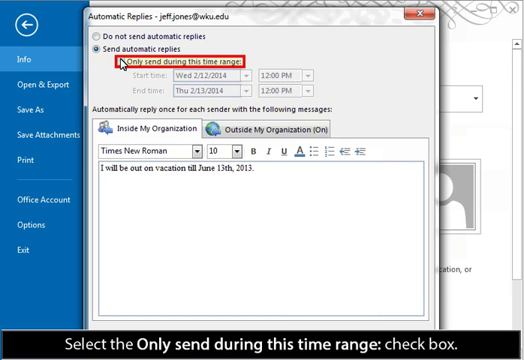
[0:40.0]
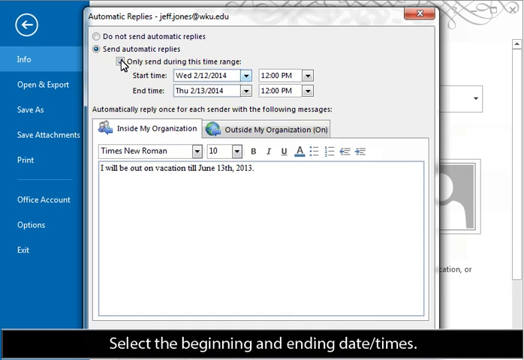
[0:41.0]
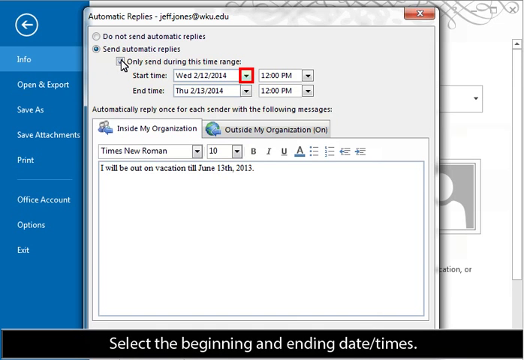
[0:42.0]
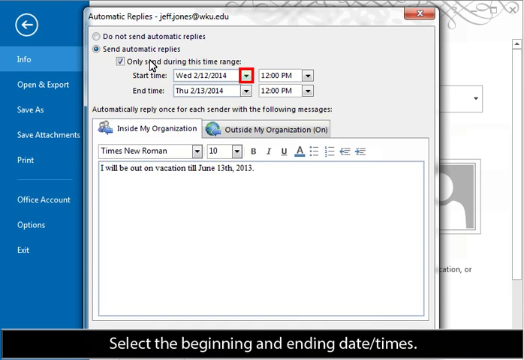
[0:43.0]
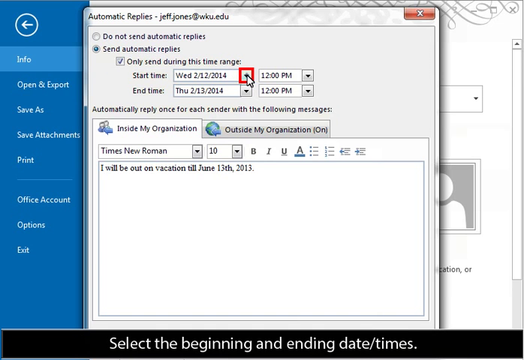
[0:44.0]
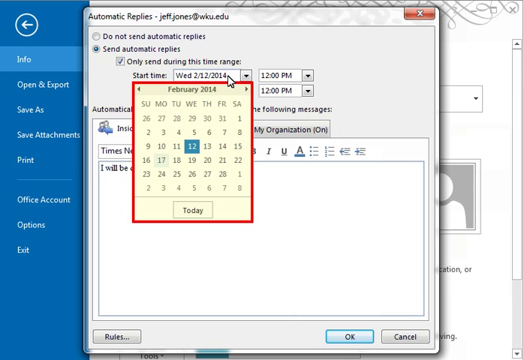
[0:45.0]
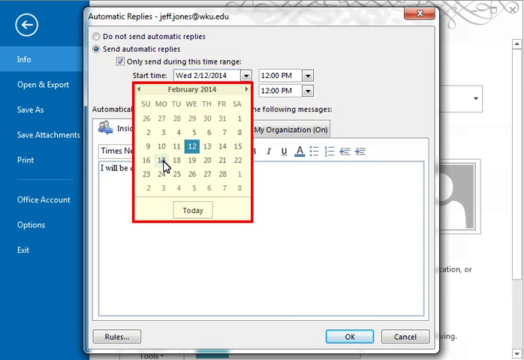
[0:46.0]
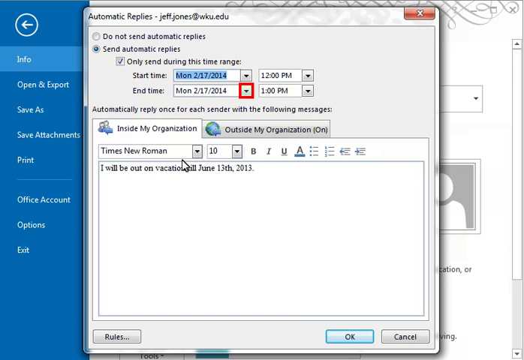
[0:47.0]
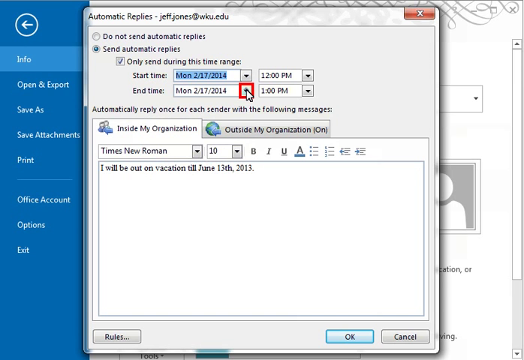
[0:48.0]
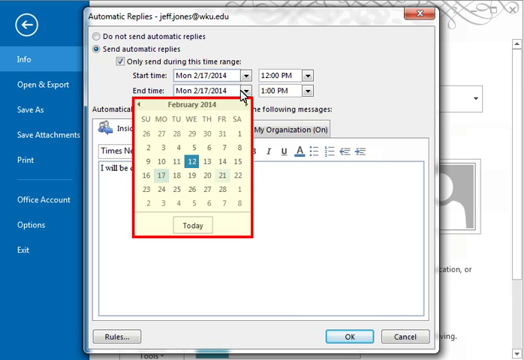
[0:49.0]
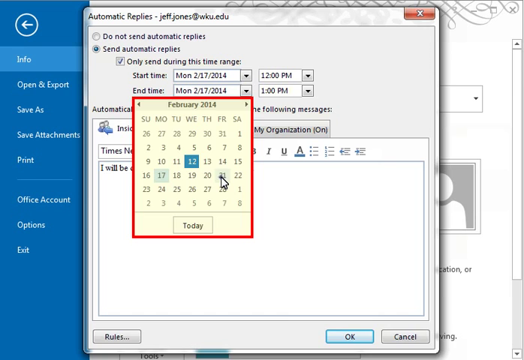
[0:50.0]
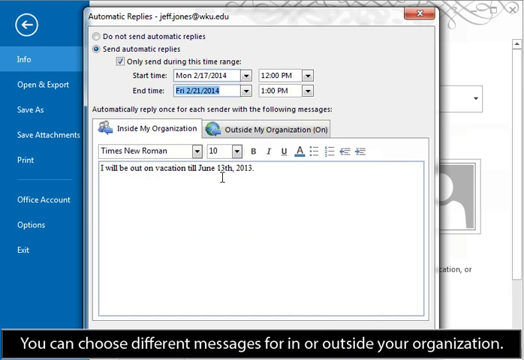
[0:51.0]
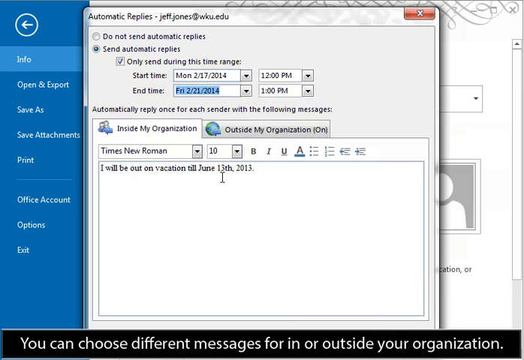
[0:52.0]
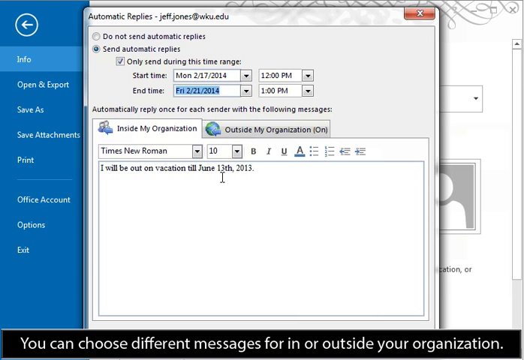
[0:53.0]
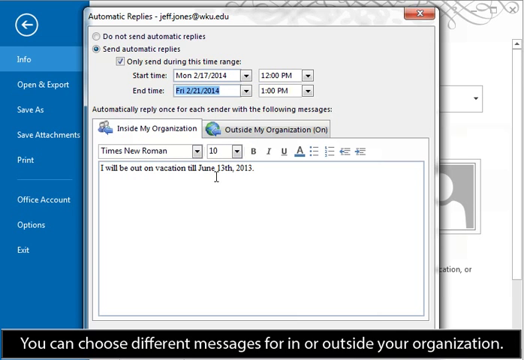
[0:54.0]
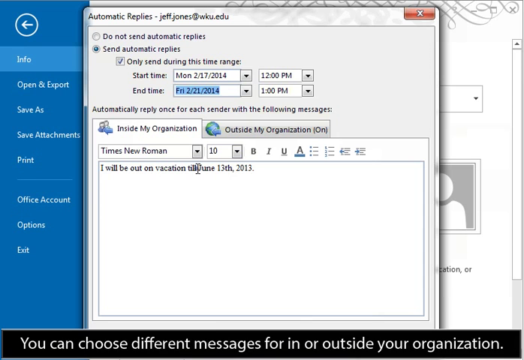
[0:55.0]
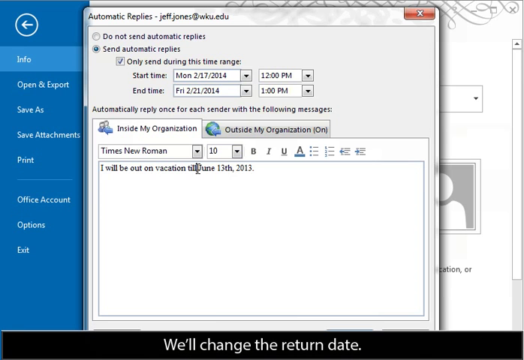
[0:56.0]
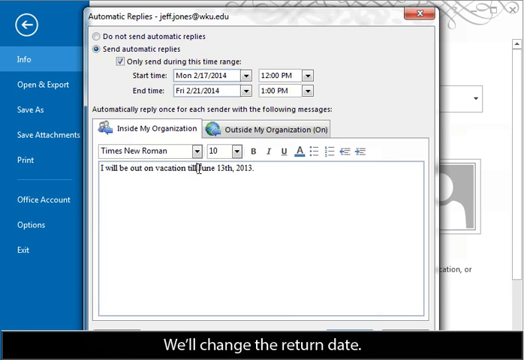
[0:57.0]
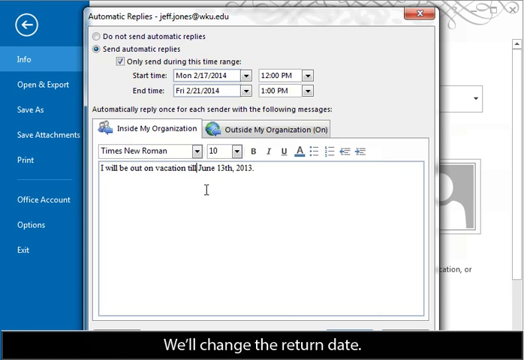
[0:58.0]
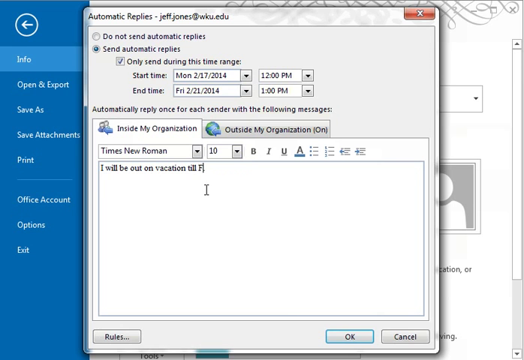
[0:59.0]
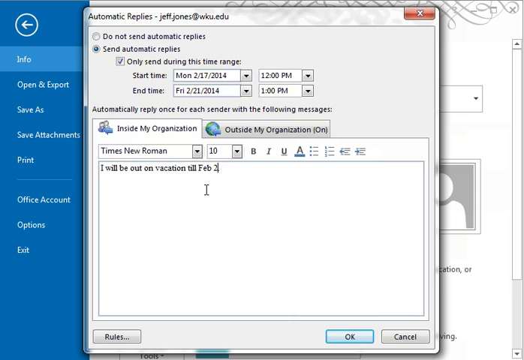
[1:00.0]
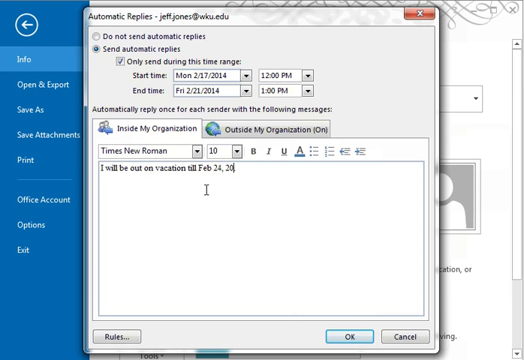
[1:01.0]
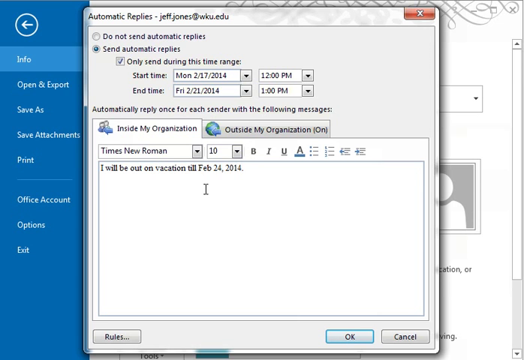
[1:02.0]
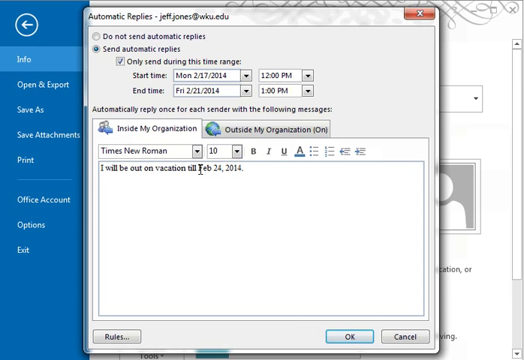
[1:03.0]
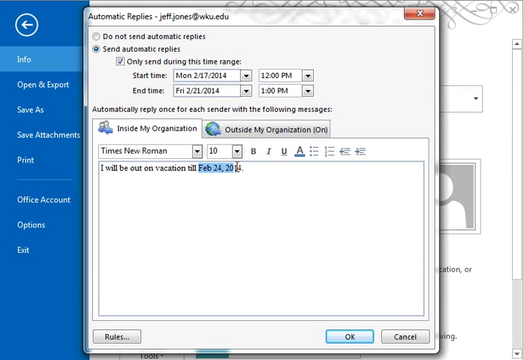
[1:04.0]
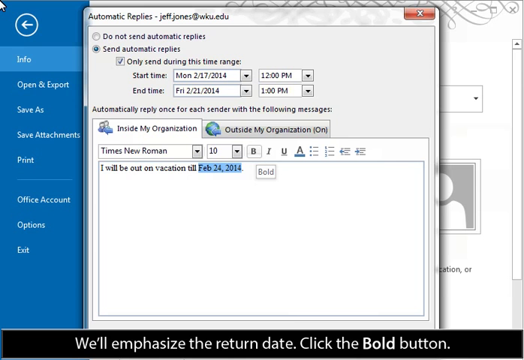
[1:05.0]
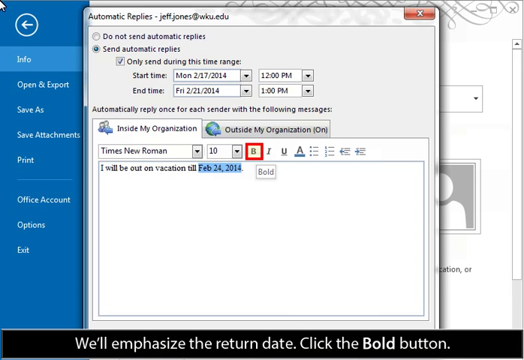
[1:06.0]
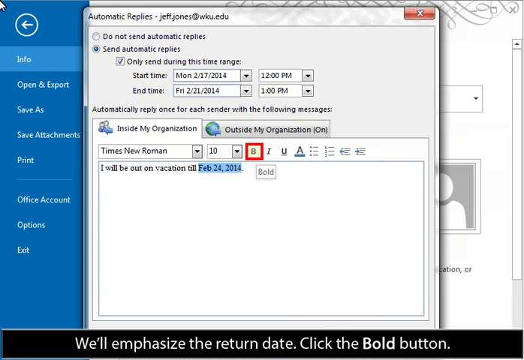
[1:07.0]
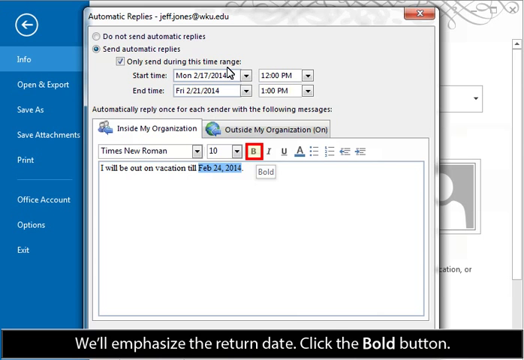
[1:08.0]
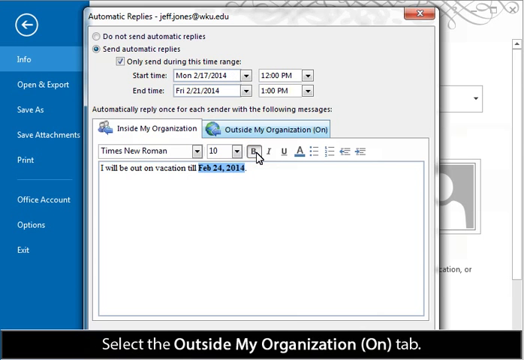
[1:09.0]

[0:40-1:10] A computer page shows a blue vertical column on the left with headings reading "Info," "Open & Export," "Save As," "Save Attachments," "Print," "Office Account," "Options" and "Exit." To the left of that is the main white area of the screen, headed "Automatic Replies - jeffjones@wku.edu." Below are two options, "Do not send automatic replies" and "Send automatic replies." A cursor moves around the page and clicks "Send automatic replies," then demonstrates entering the dates for the period during which automatic replies are sent, bringing up a calendar to select the days. Below that, a sentence reads "Automatically reply once for each sender with the following messages:" followed by an area for writing a message.